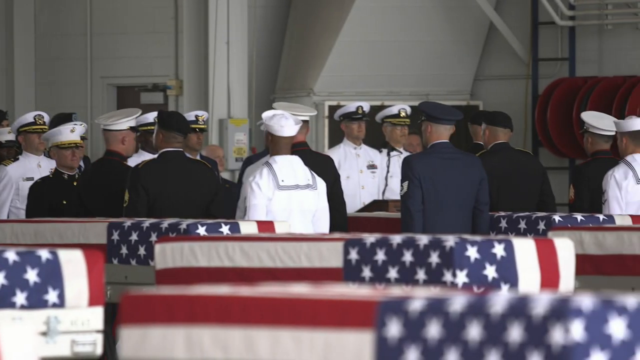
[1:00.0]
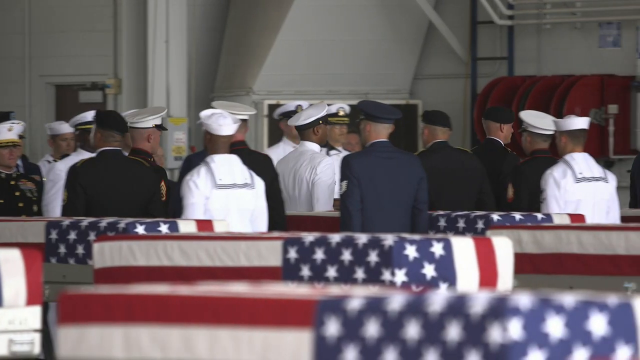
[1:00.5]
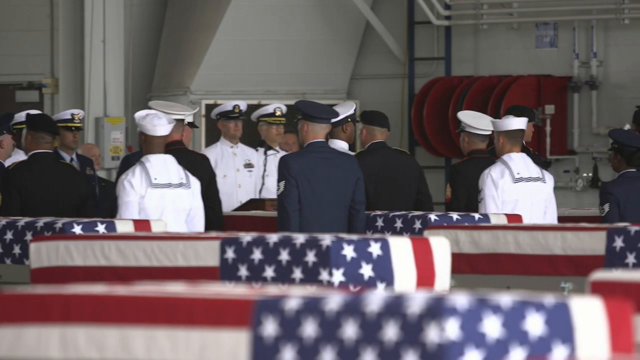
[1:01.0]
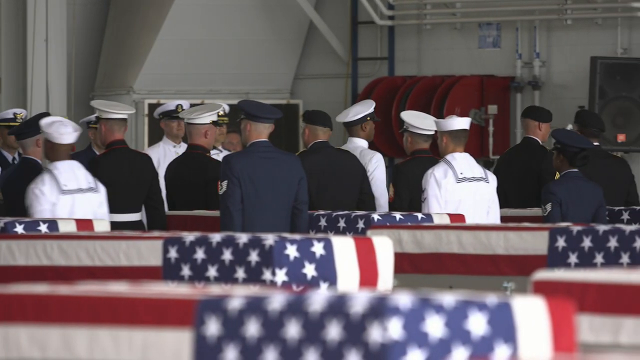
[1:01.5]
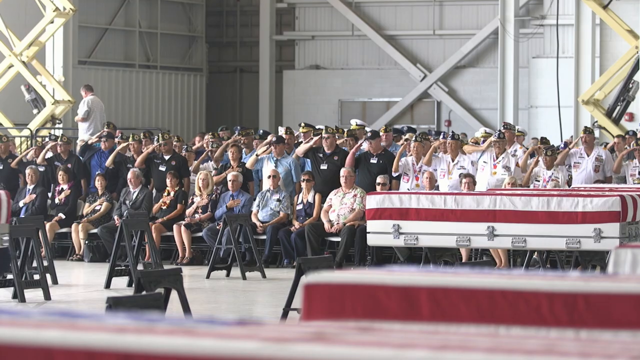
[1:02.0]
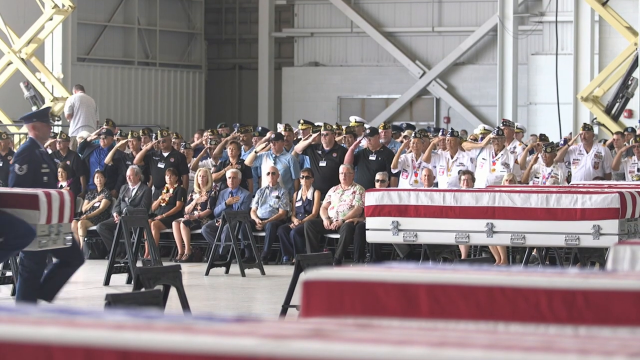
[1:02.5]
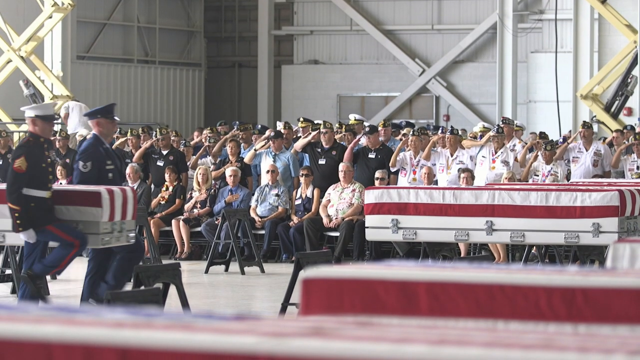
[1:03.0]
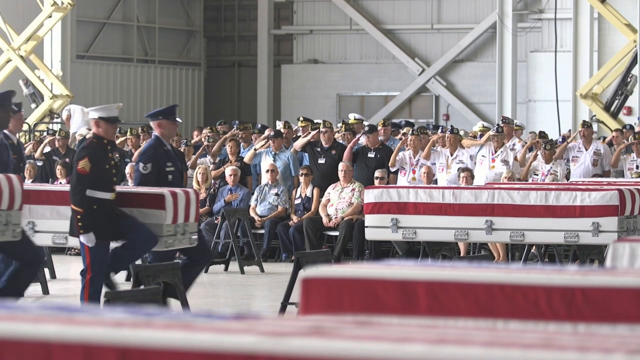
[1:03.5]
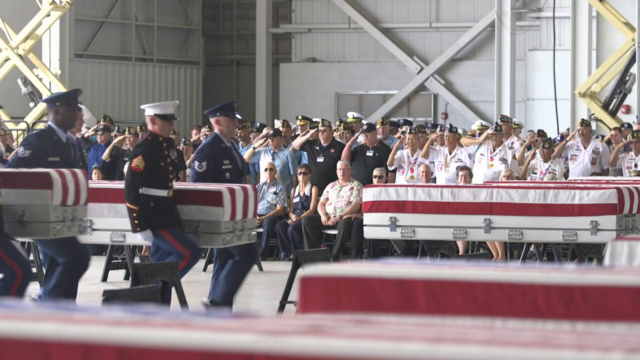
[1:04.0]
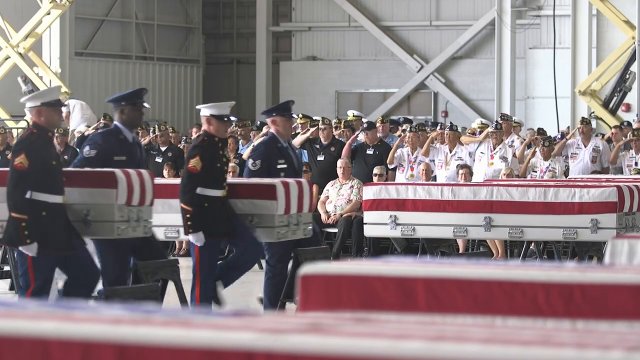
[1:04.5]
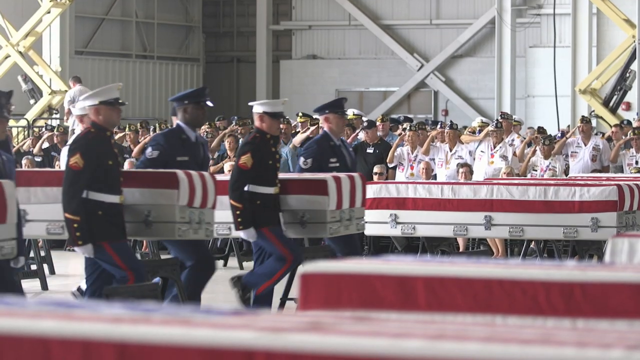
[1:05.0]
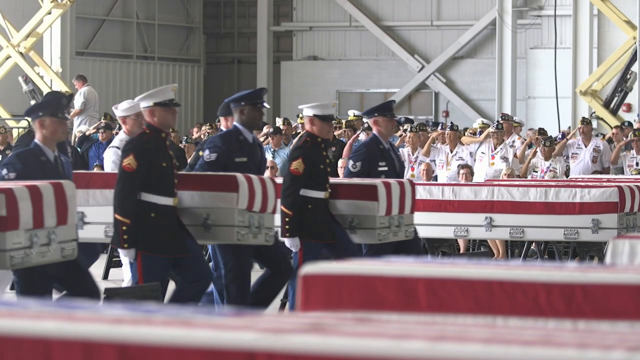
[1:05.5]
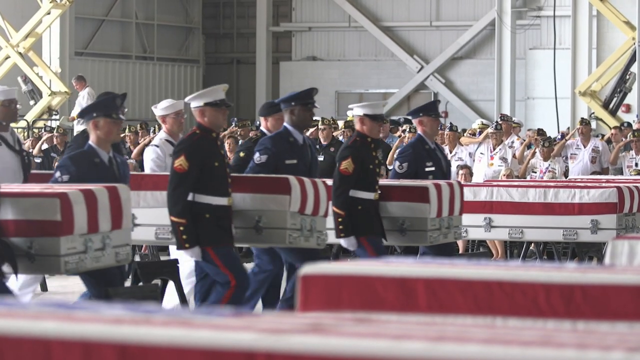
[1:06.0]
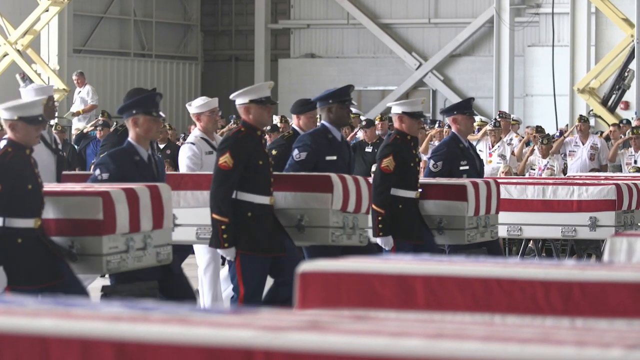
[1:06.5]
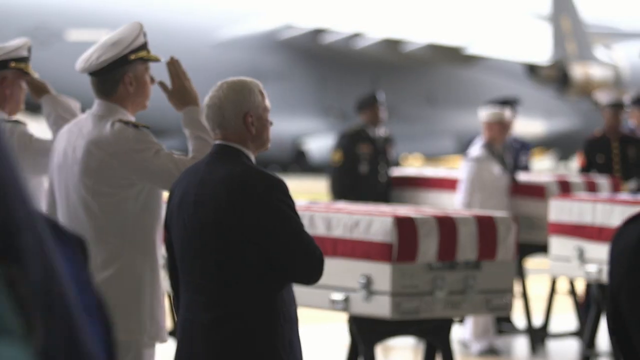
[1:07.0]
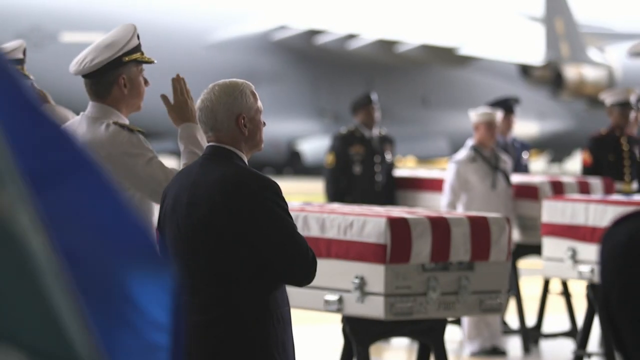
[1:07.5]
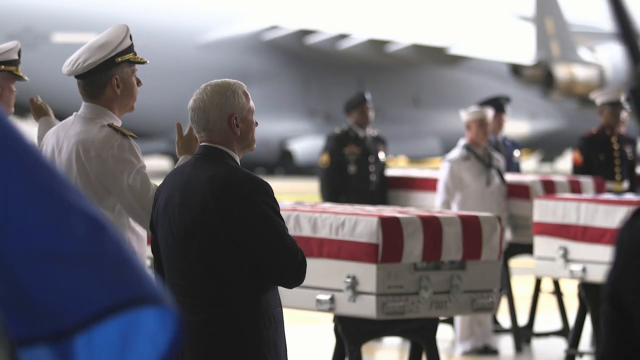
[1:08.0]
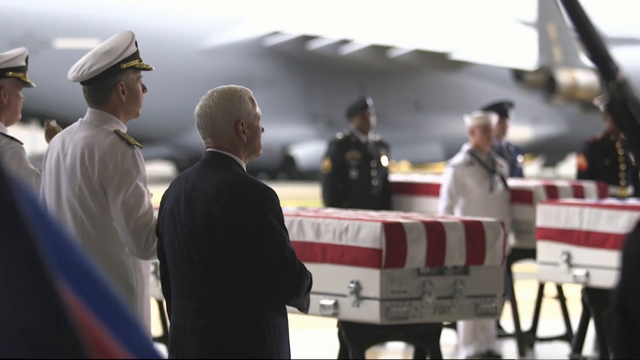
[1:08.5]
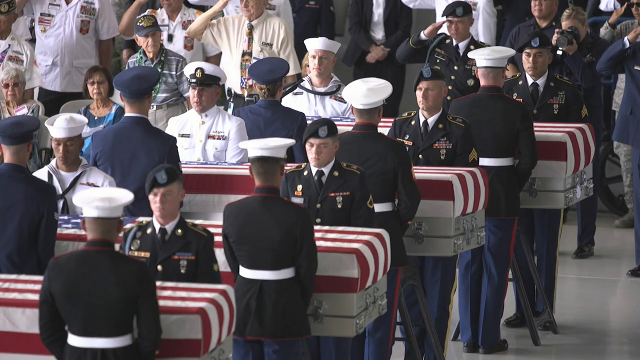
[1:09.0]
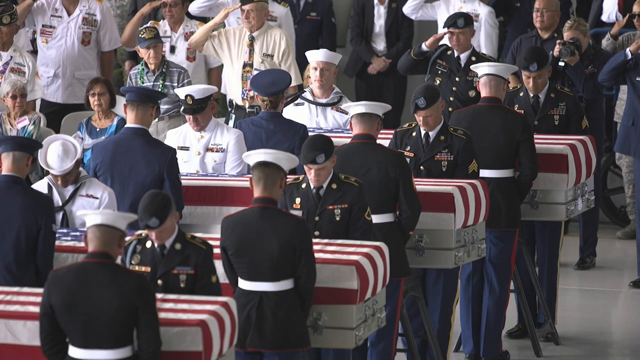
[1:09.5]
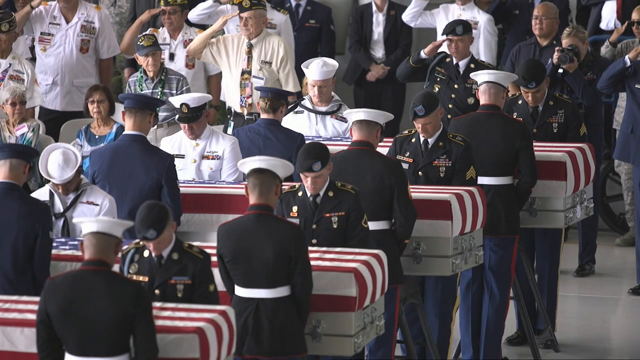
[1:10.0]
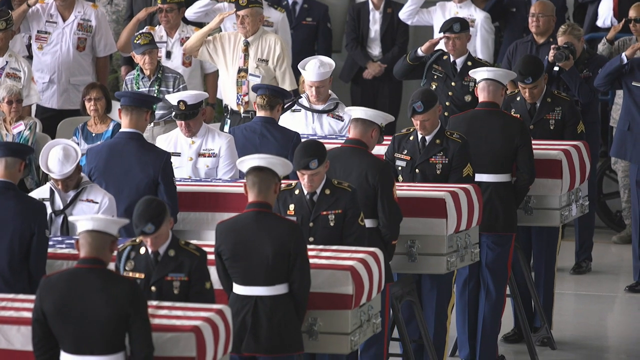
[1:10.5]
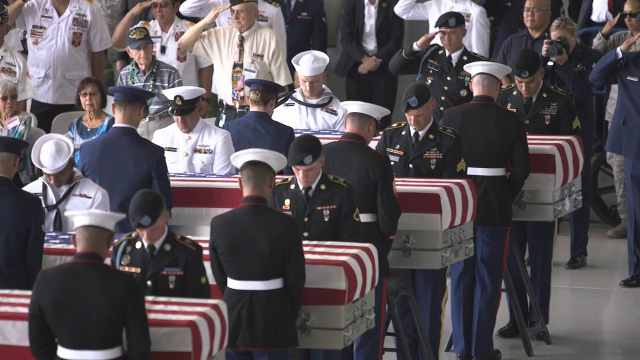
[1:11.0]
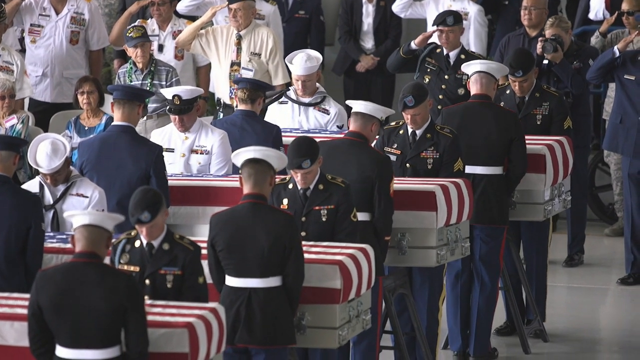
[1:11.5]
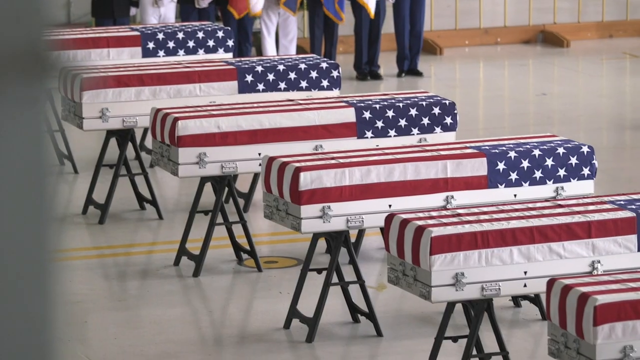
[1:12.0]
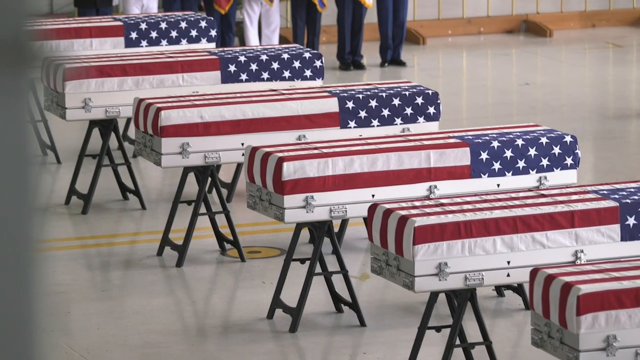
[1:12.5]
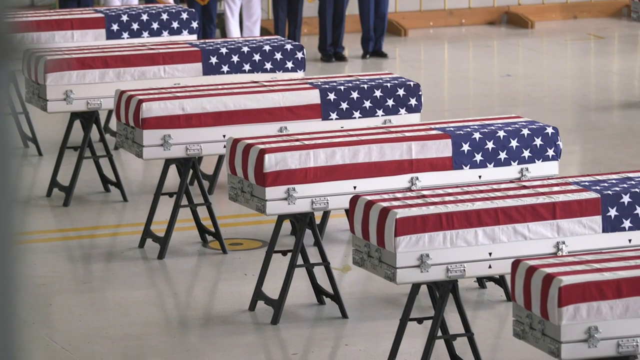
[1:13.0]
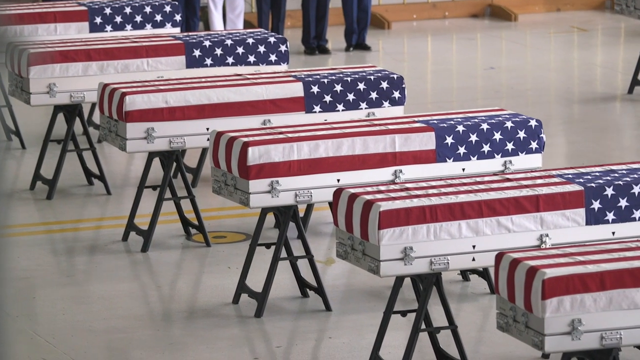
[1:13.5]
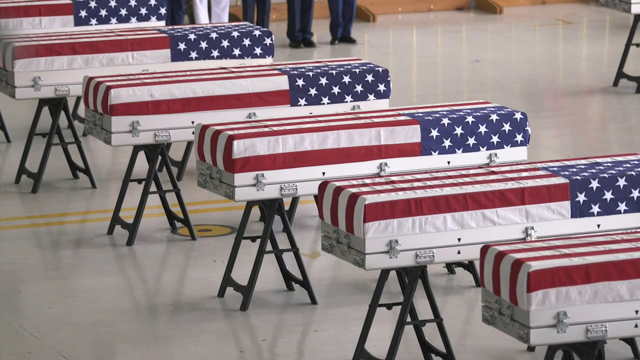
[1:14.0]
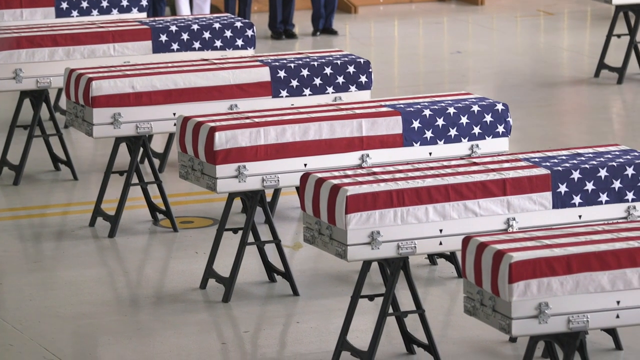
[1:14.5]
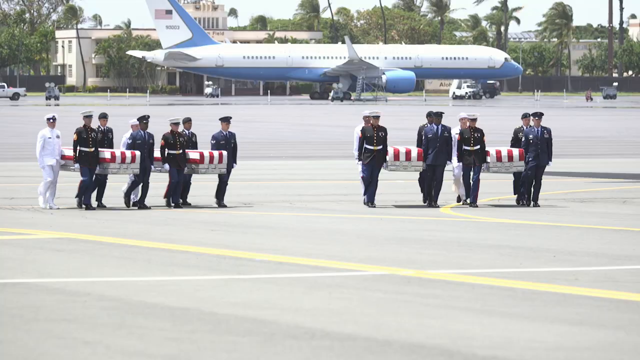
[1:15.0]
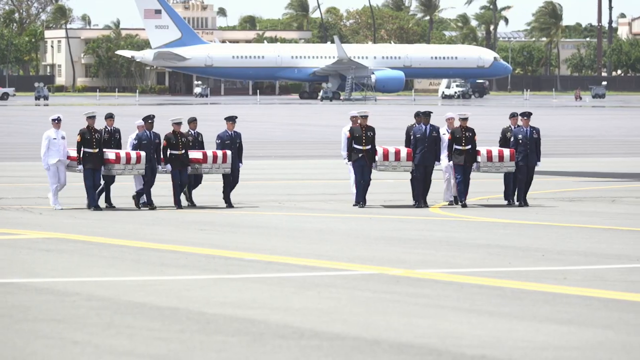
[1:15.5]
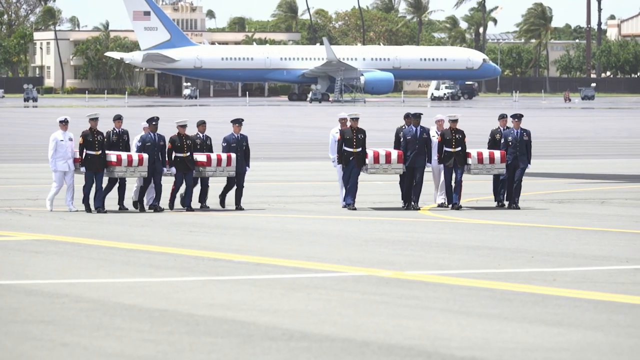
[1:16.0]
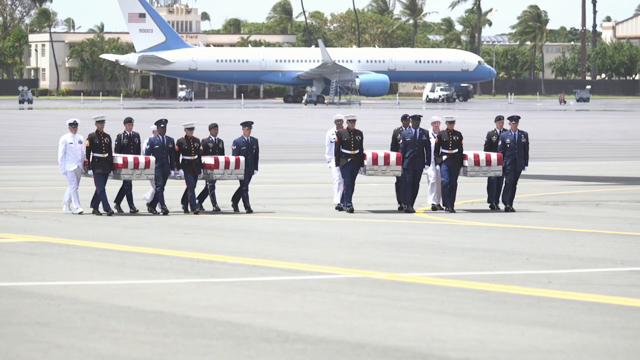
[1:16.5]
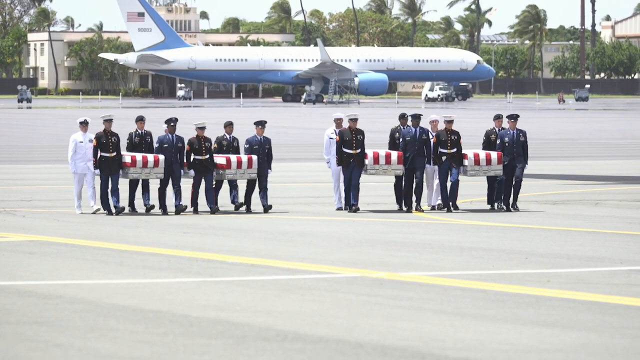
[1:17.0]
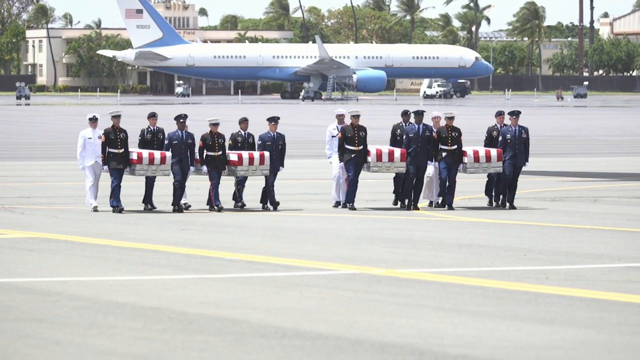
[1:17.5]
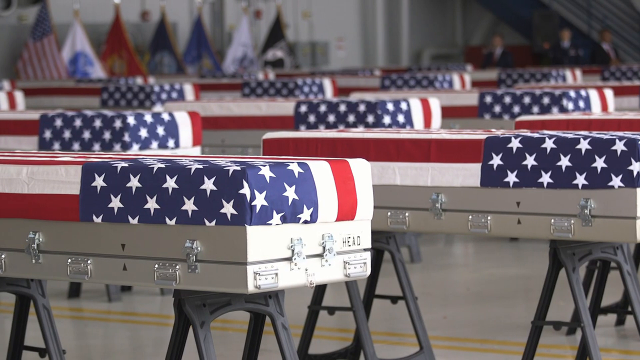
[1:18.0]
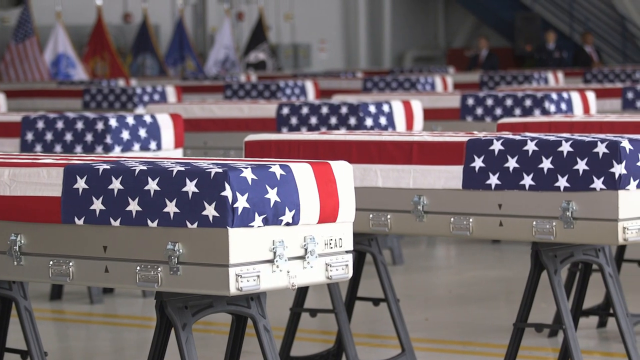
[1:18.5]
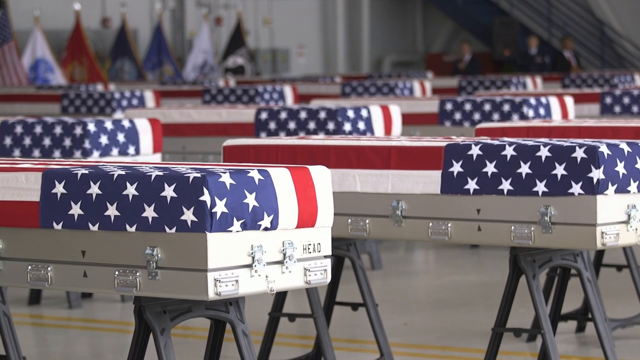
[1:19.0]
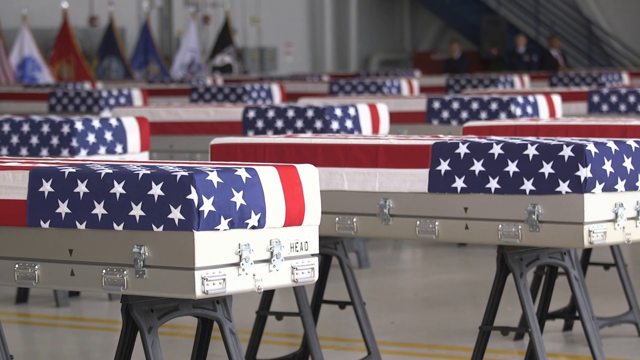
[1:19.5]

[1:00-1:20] People pay tribute, military and civilians, with some people sitting in the open and others saluting. The scene depicts a military funeral, with a casket draped in an American flag carried by a pallbearer in military uniform. Several other military personnel stand at attention, and saluting civilians are visible in the background. The ceremony appears to include four uniformed personnel in dark blue carrying a casket wrapped in an American flag, with a crowd of people in white uniforms visible behind the casket bearers, some of them saluting. People sit in the crowd, possibly relatives of the deceased. A man in a dark suit stands at a podium addressing an audience, apparently speaking at the ceremony with various international flags displayed behind him. People in military uniform are seated to the left and standing to the right of the podium. Men and women sit down, and people of all generations salute.